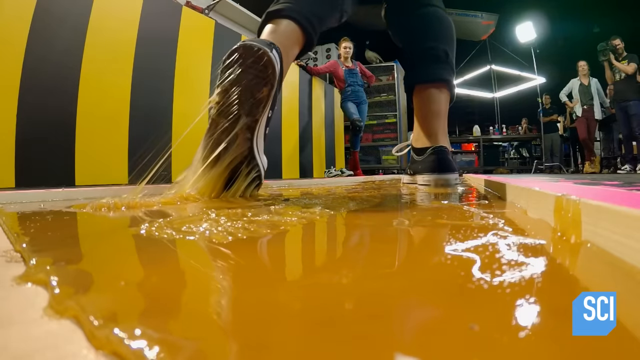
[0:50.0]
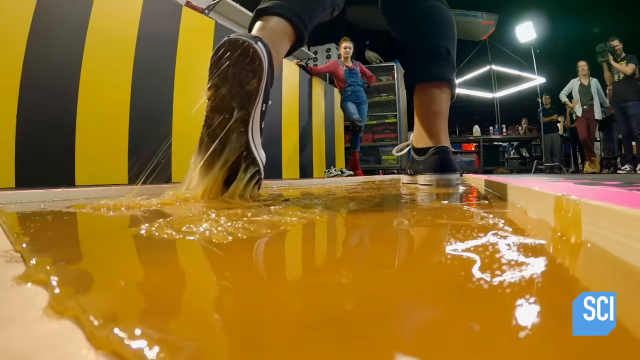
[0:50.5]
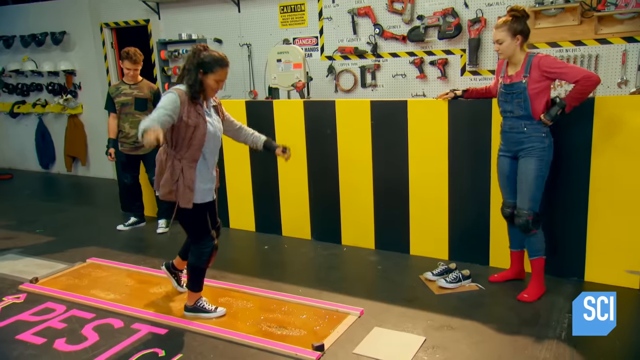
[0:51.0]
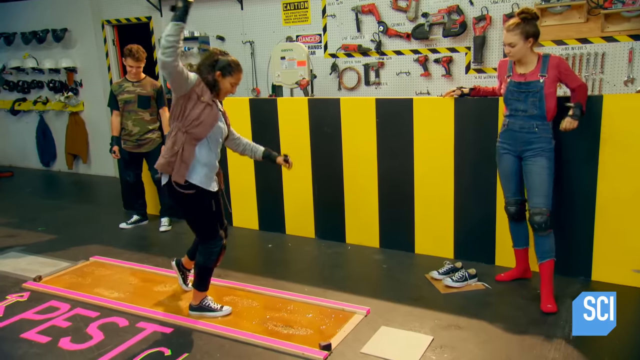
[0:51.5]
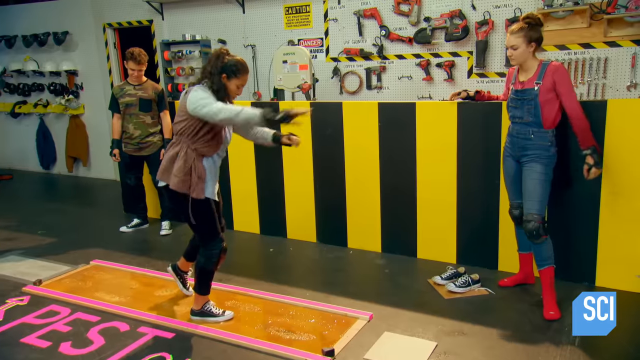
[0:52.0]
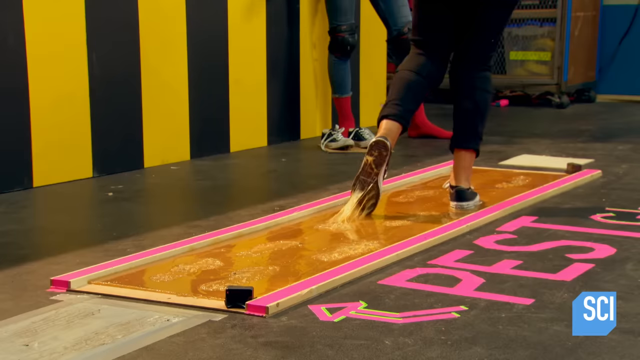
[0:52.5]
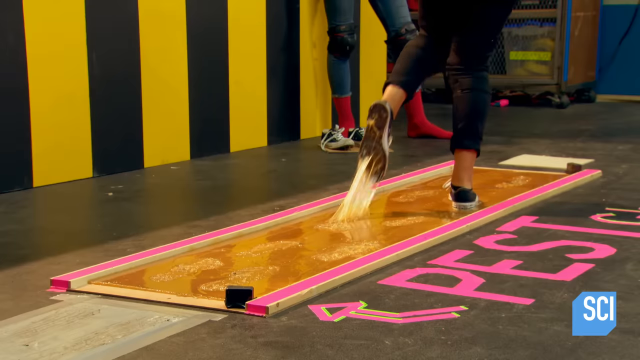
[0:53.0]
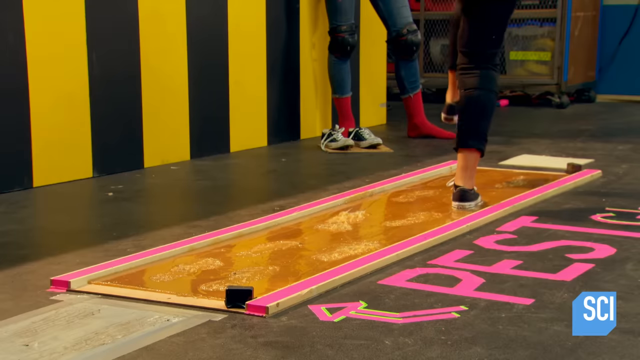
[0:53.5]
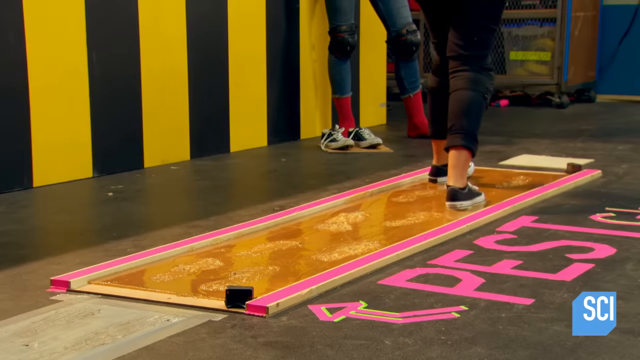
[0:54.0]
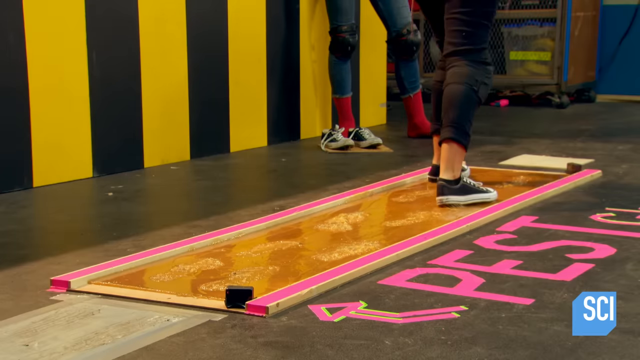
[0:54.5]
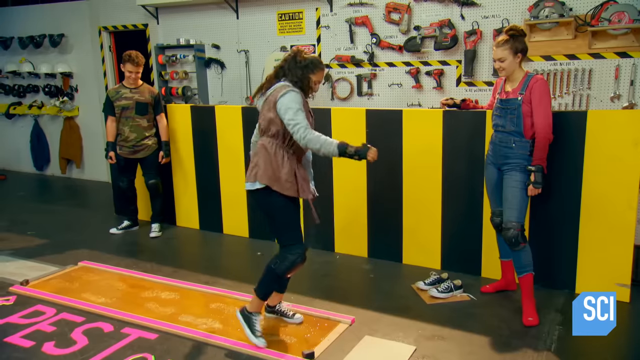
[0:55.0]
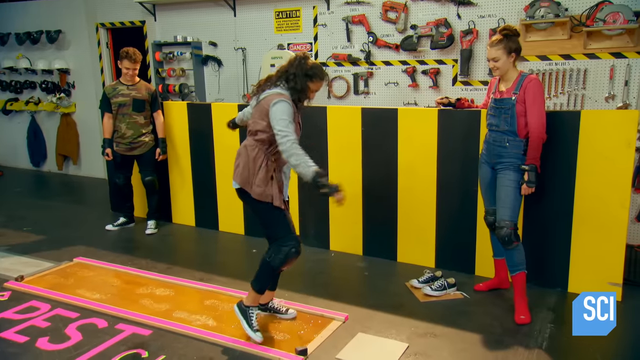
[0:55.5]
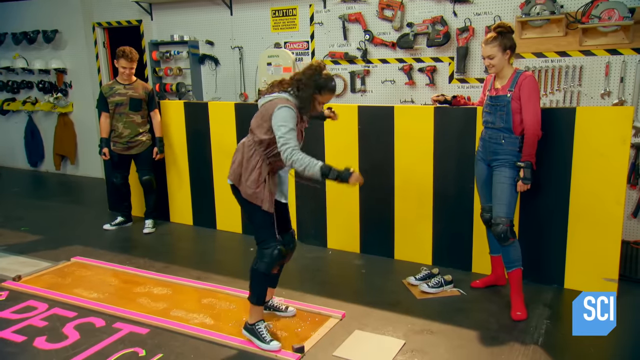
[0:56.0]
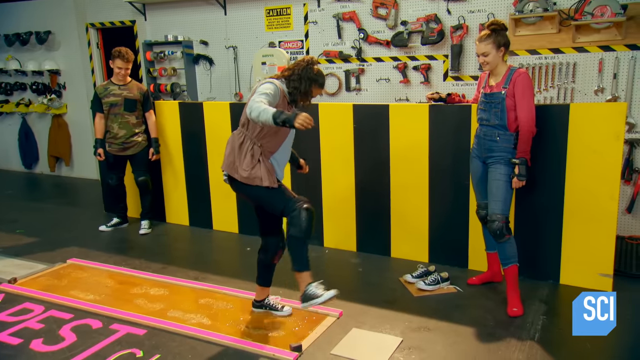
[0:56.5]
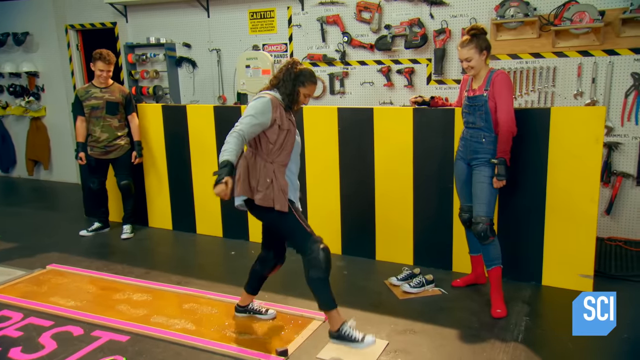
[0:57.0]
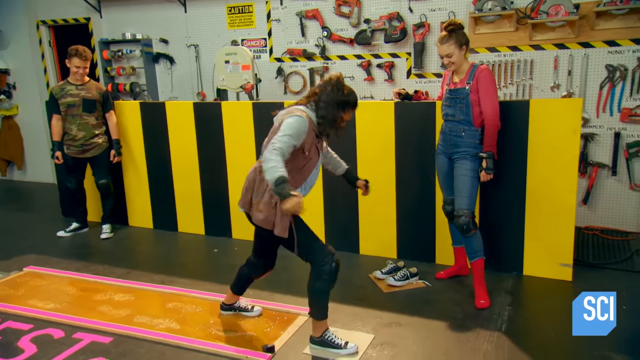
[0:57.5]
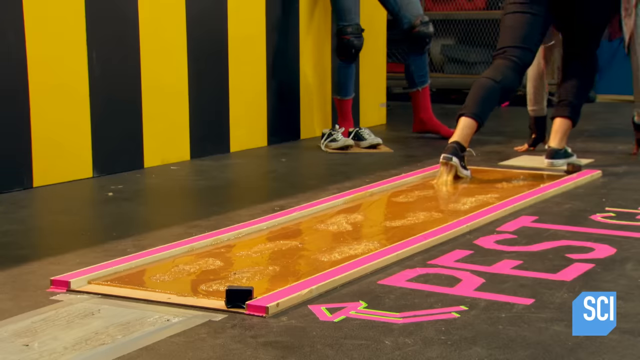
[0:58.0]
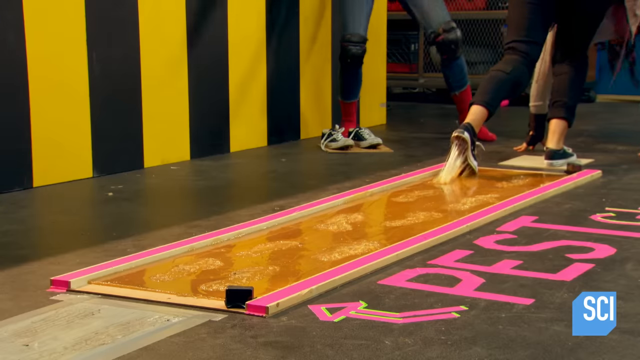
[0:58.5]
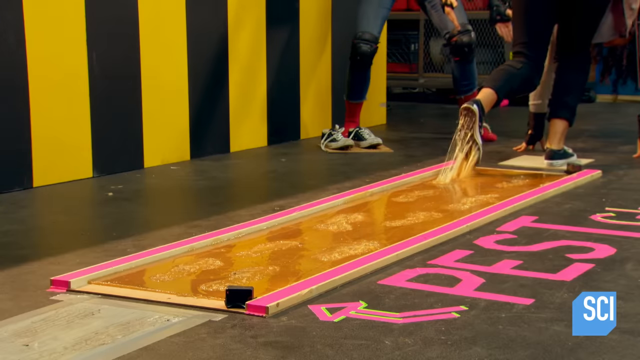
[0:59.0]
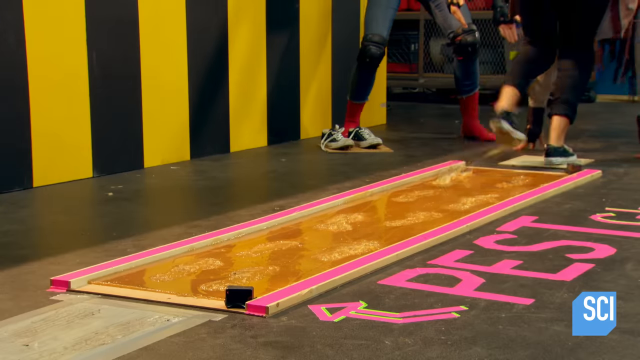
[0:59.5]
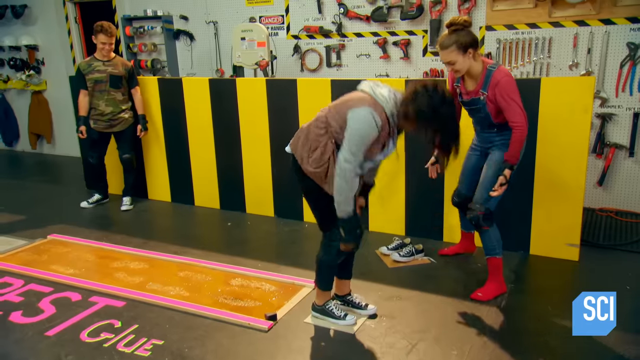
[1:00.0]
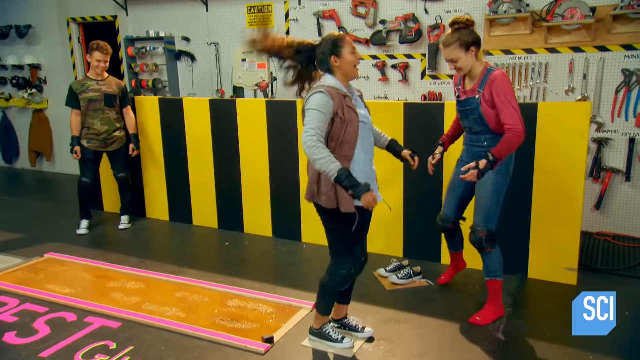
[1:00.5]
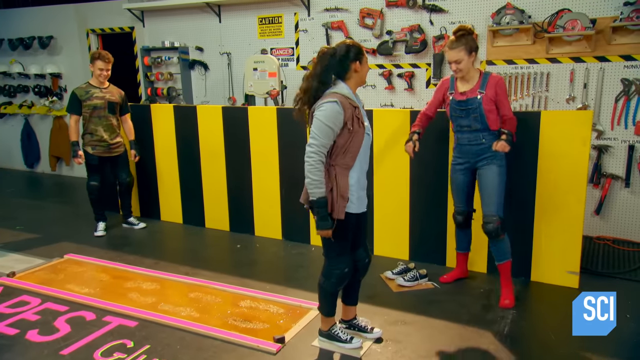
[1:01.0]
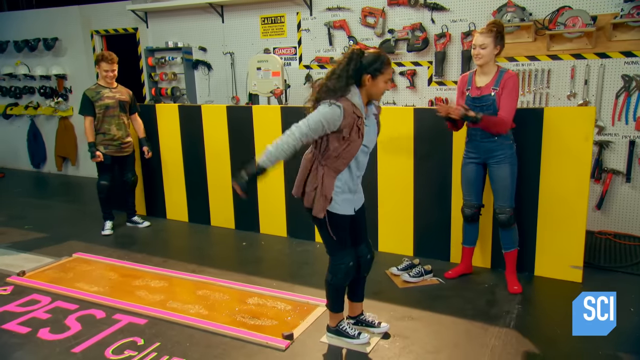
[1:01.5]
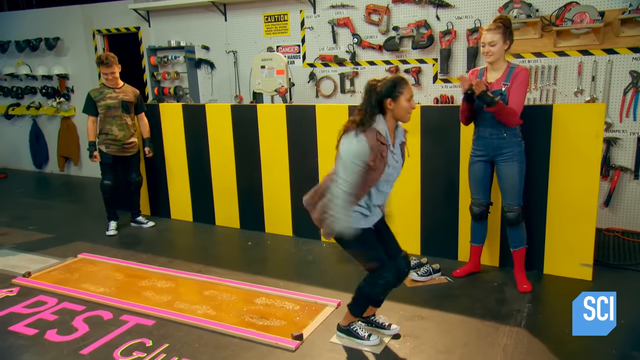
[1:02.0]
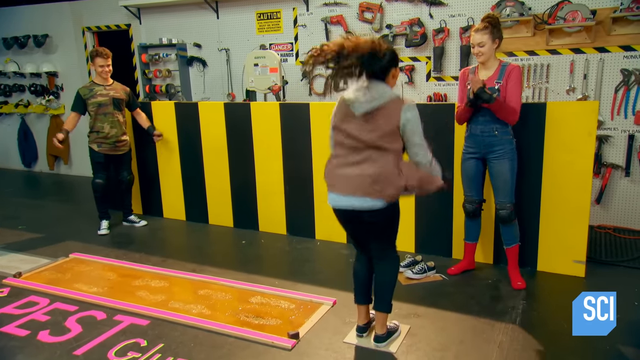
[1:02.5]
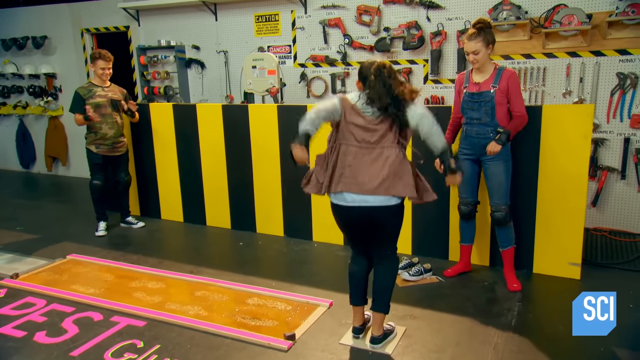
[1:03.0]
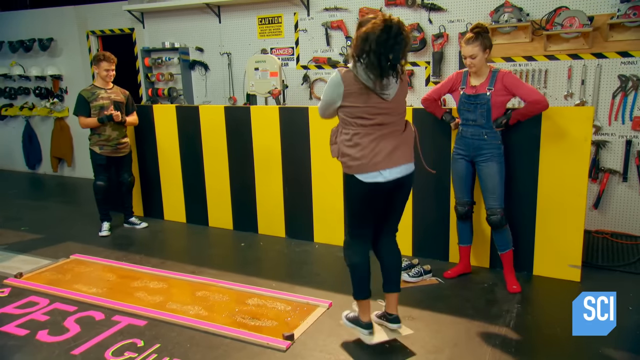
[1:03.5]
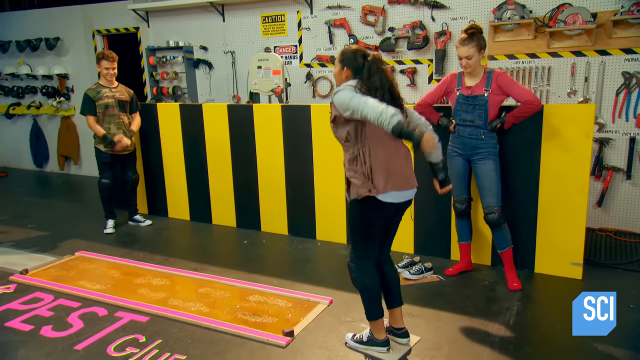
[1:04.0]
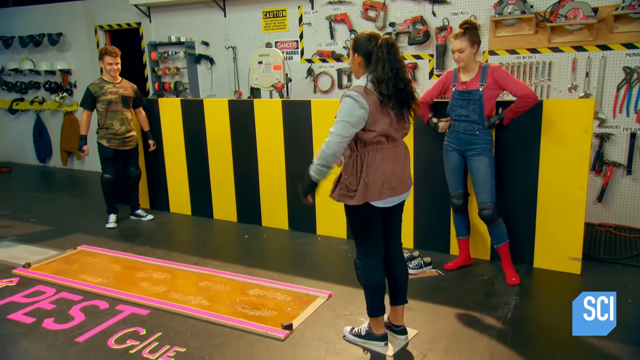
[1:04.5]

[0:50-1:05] The young lady continues trying to walk across the plank, which is about three or four feet long. Below it, letters in hot pink masking tape read "Pest Glue", pointing up at the board she is walking across. She takes each step carefully, having to pull and release her foot from the glue. She takes seven steps in total before reaching the end, where the young lady in the overalls has placed a plank of wood for her to put her feet on so she doesn't stick to the floor. Her sneakers stick to this plank of wood, so she jumps without moving her feet to turn herself to face the left, as the young lady in the overalls claps for her and points at her feet. The young man in the camouflage t-shirt is standing to the left. Behind them in the workshop is a wall with many power tools hung on an organizational board, as well as mechanical tools, jackets, and safety equipment such as helmets, goggles, and the face masks they wore earlier. The set appears to be a studio rather than an actual workshop.